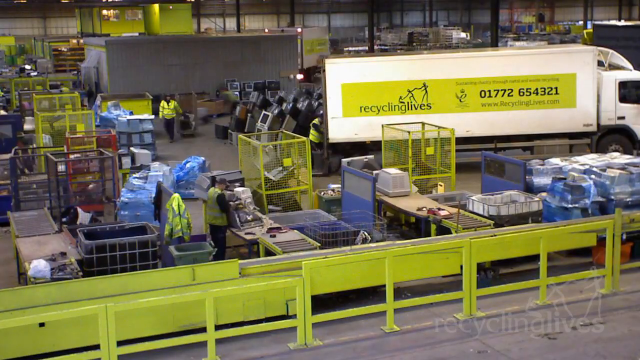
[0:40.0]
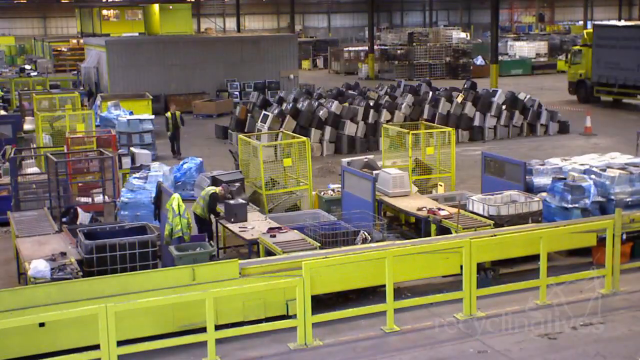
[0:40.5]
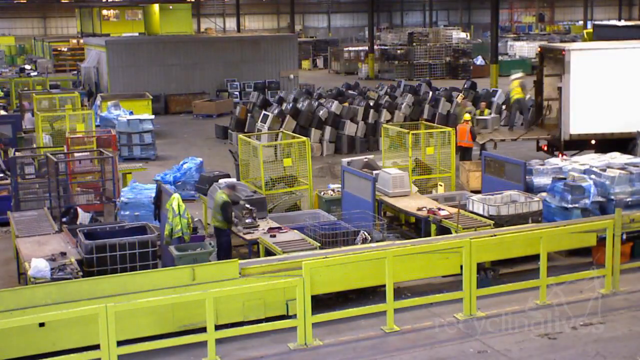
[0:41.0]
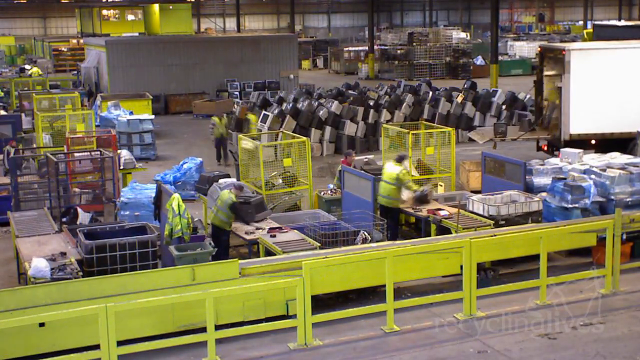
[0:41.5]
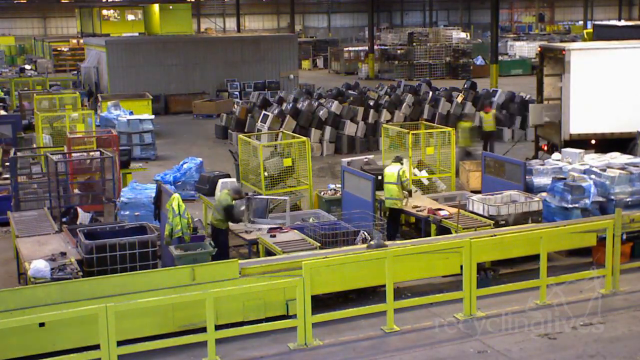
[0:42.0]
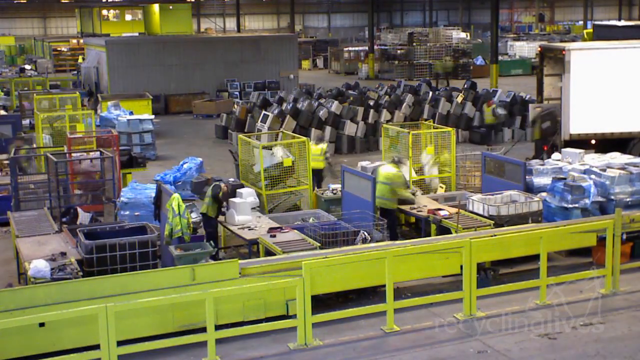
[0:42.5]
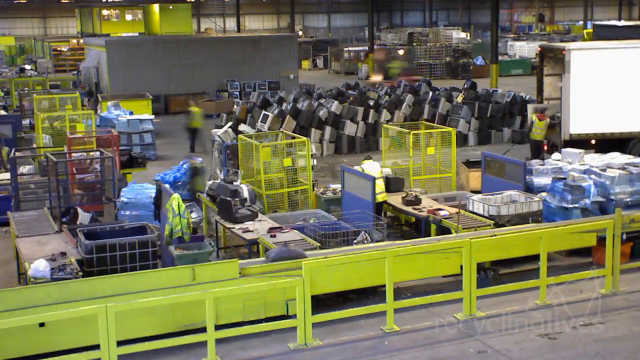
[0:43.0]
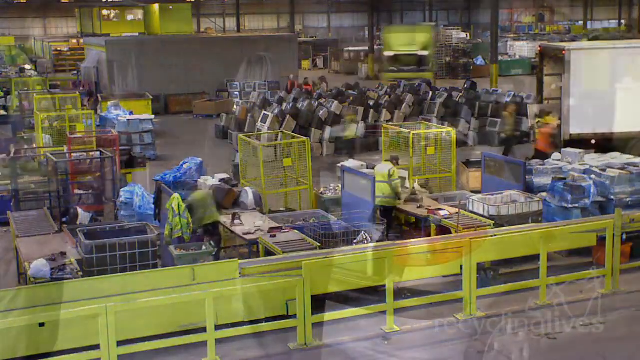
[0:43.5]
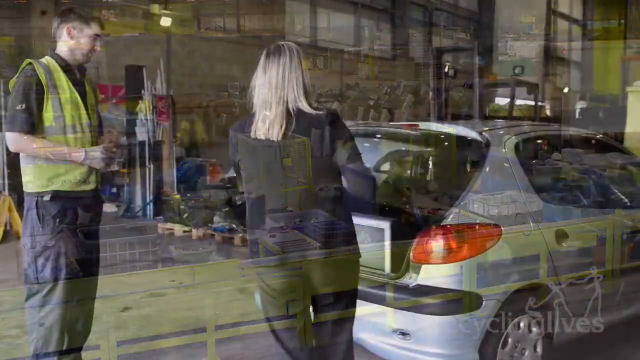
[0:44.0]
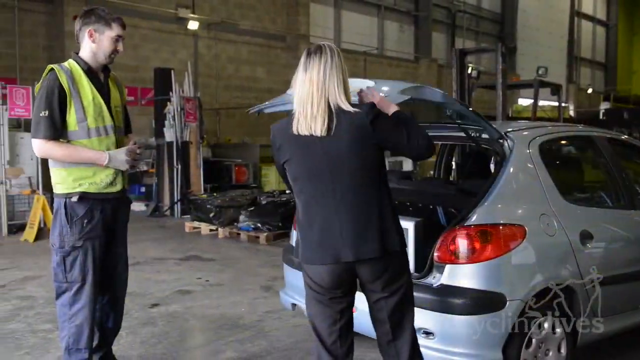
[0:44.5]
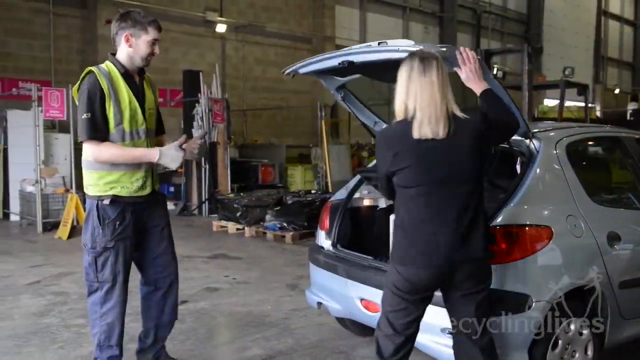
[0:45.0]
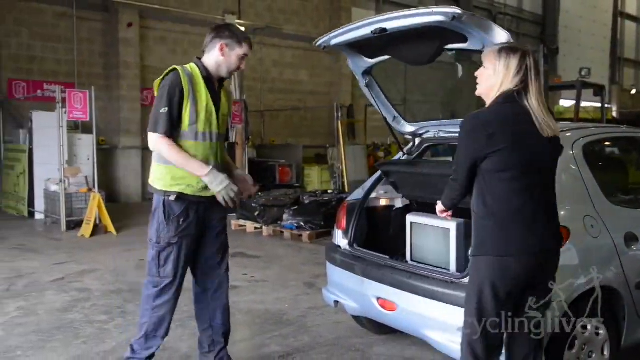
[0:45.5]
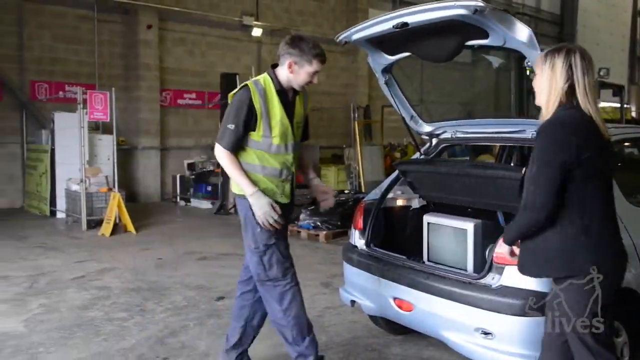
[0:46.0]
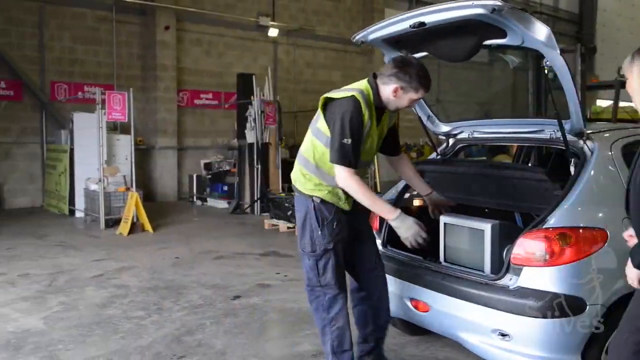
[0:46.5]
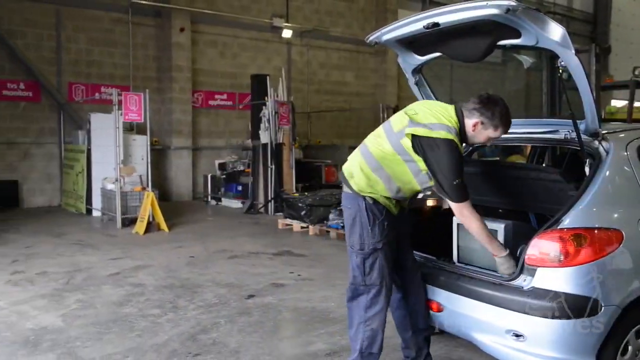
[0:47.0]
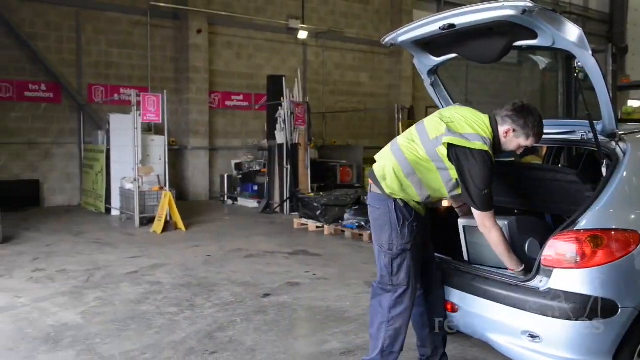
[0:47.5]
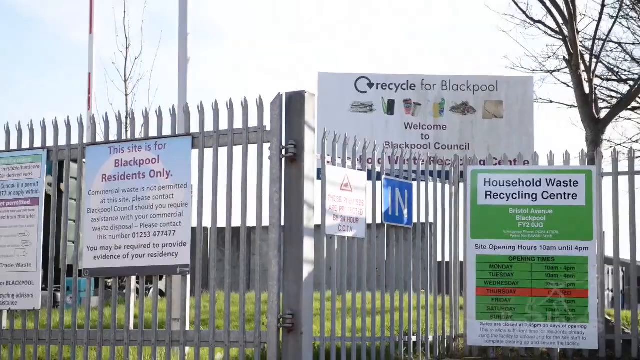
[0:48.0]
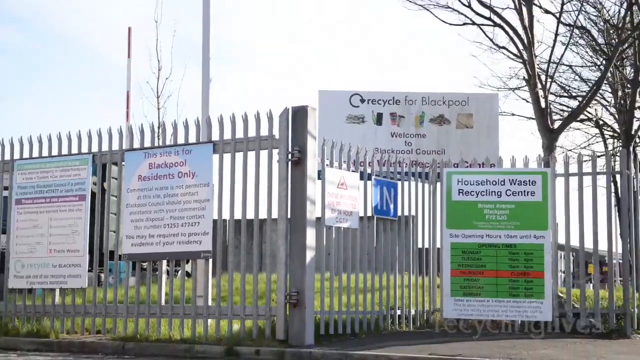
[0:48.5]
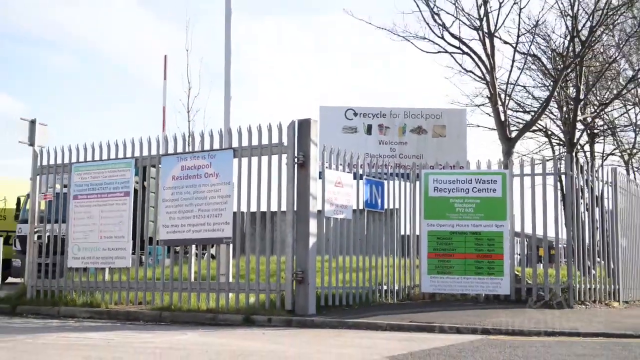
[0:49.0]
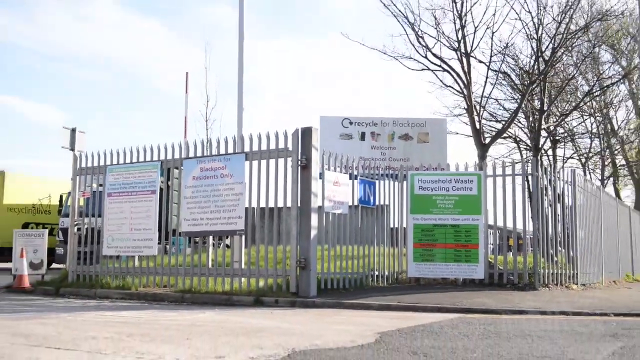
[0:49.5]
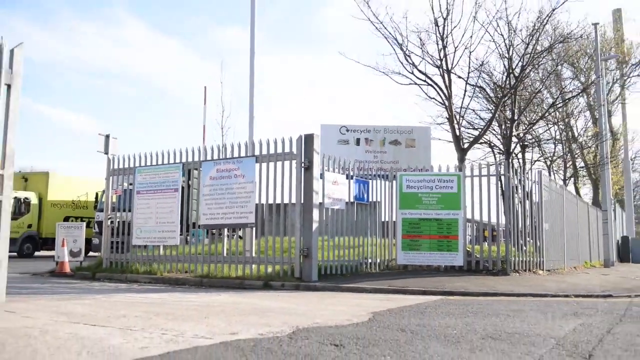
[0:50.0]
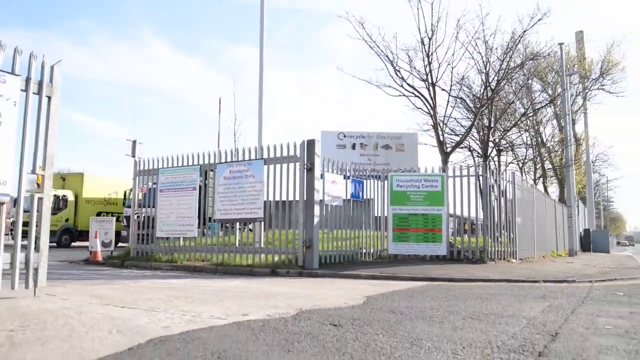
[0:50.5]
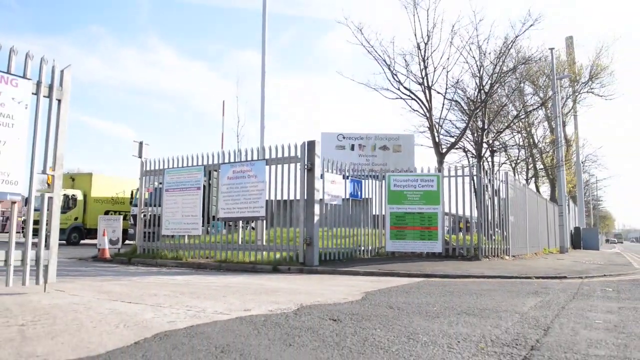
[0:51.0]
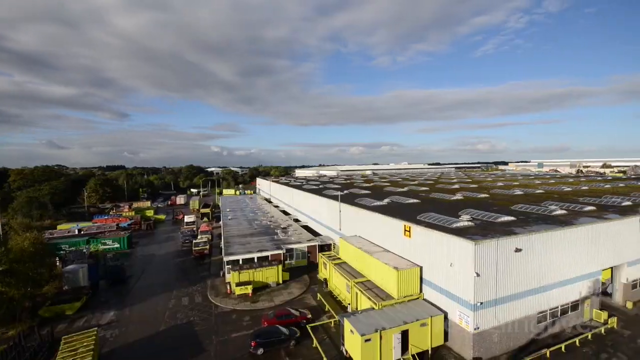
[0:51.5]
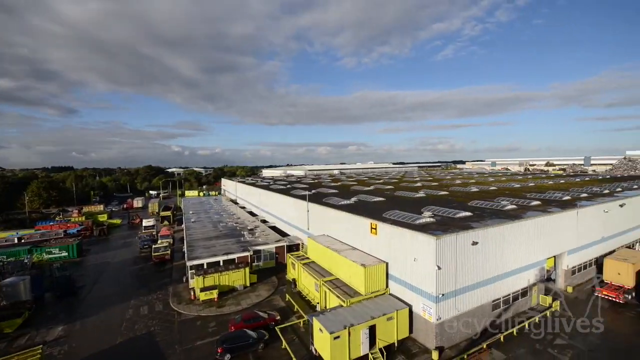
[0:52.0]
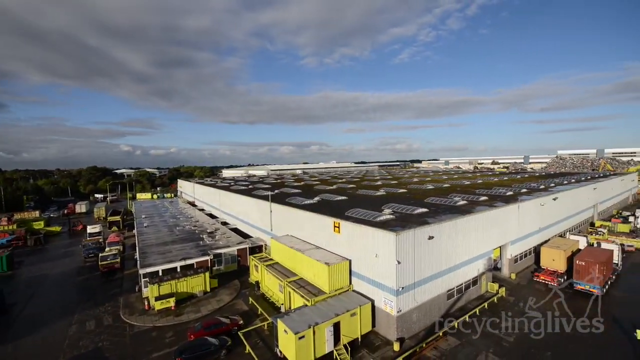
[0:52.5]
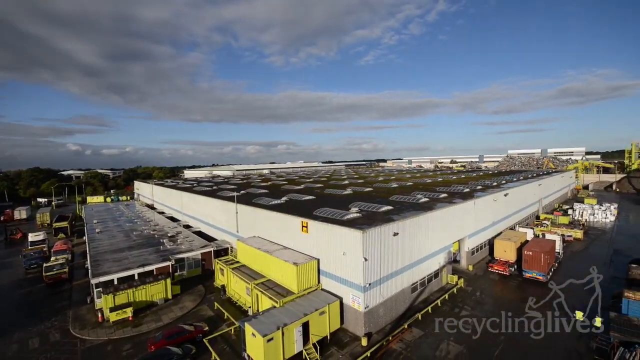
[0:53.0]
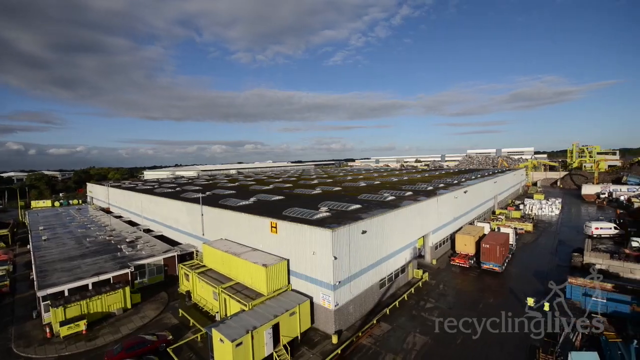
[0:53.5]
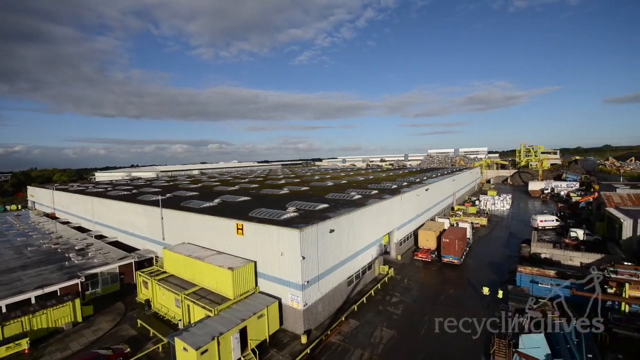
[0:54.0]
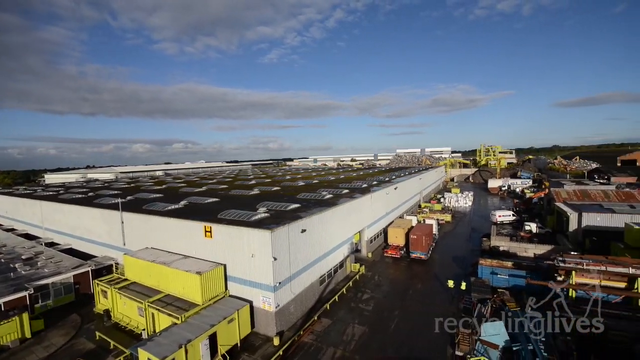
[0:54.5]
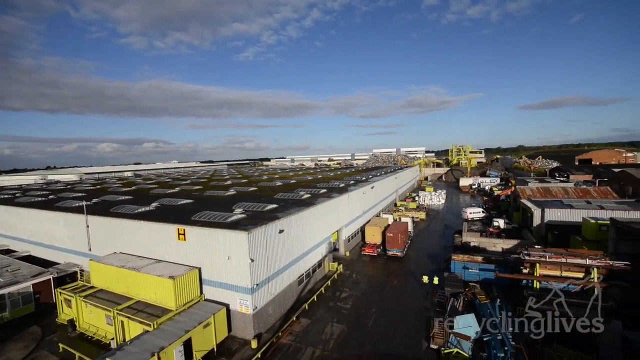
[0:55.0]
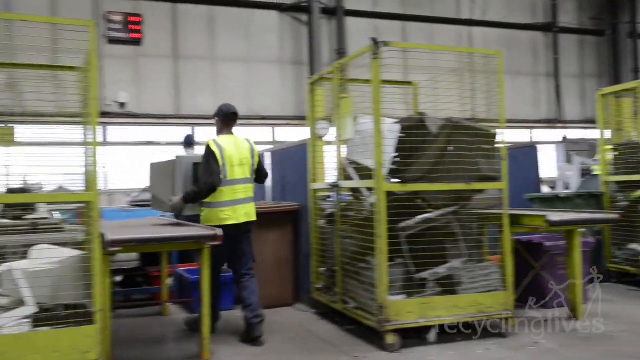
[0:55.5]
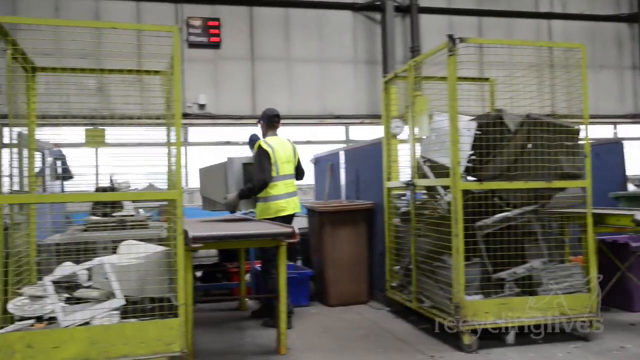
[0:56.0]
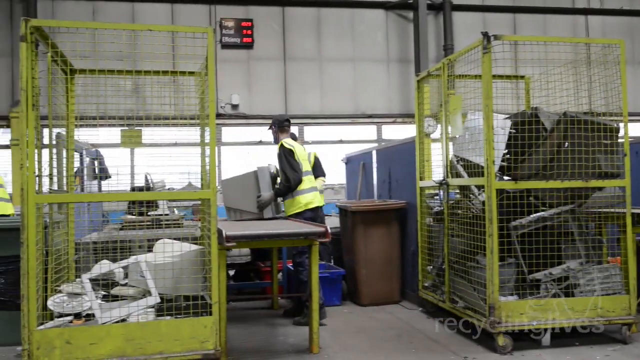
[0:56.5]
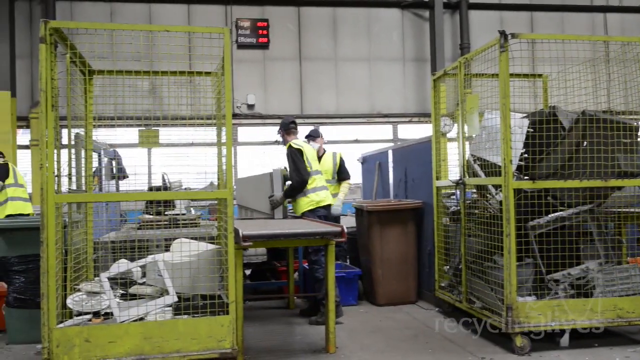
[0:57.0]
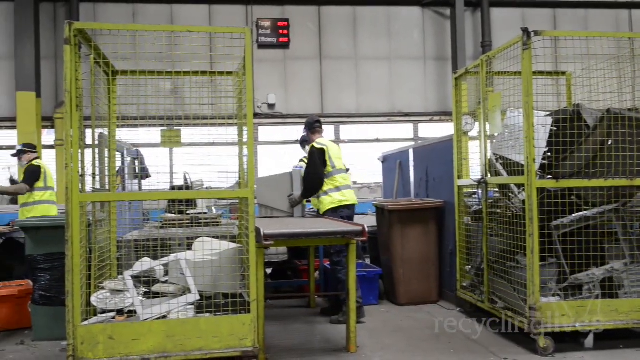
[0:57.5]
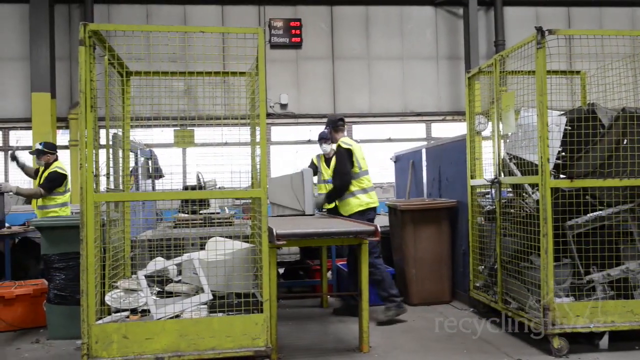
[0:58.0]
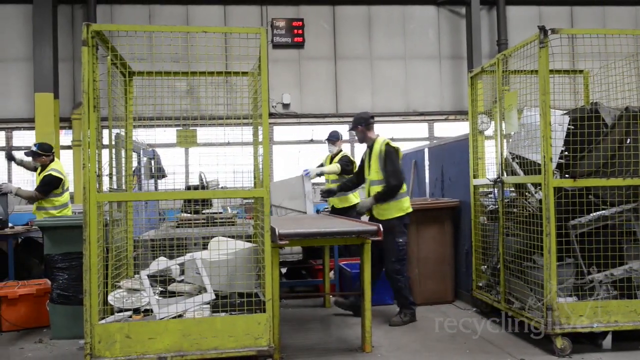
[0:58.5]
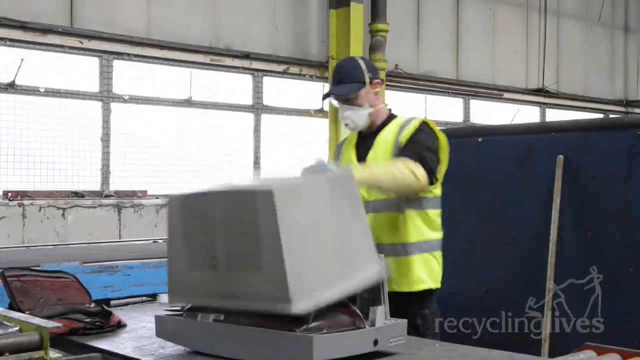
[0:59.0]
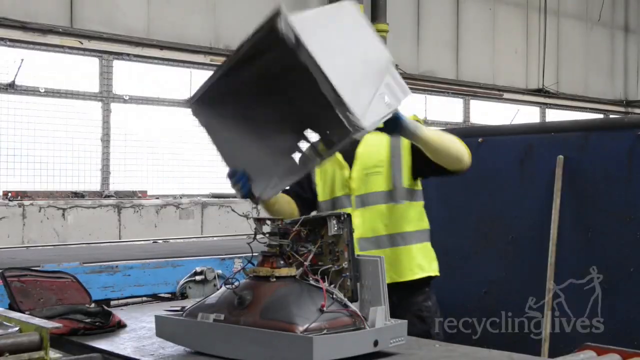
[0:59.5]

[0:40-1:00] Inside a warehouse there is a white truck with a yellow sign on its side that says "Recycling Lives", along with a logo featuring stick figures. Yellow crates are stacked around the warehouse, along with blue and black crates, and TV sets are in the background. People organize the TV sets into crates and load them into the truck. A woman with long blonde hair opens the trunk of a vehicle, which has a TV monitor inside, and shows it to a man wearing a yellow and gray vest, a black shirt and dark blue pants; he reaches inside and looks at the TV set. The recycling center is then shown from outside, with a tall metal fence and brown, brambly, leafless dead trees, probably a winter scene. A yellow truck is inside the fence. Another shot shows the entire building: a very large warehouse with white walls, a yellow cargo container section on the side, and vehicles parked in the back under a blue sky with gray clouds. Then men work inside the warehouse, one of them wearing a face mask; they carry a TV set over to their table, lift up the top and expose the wiring inside it.